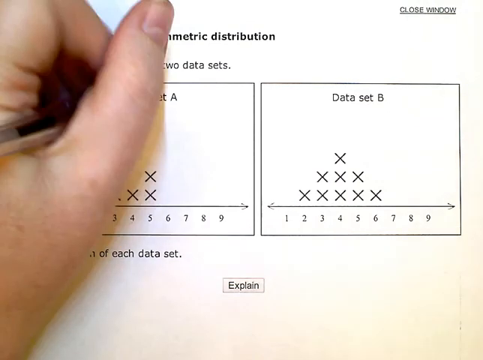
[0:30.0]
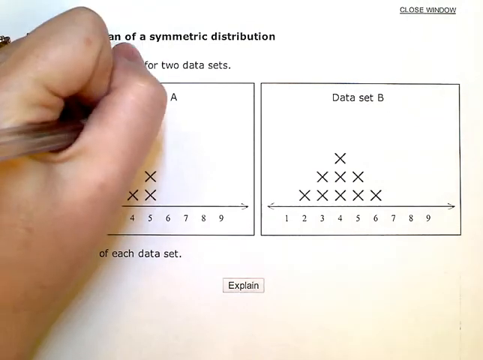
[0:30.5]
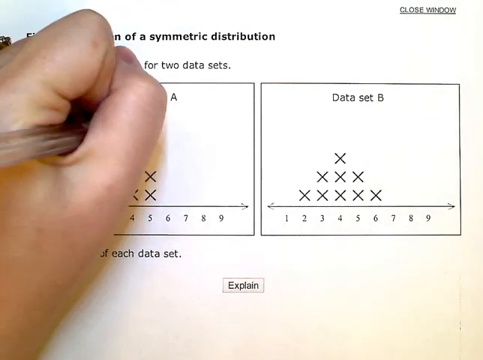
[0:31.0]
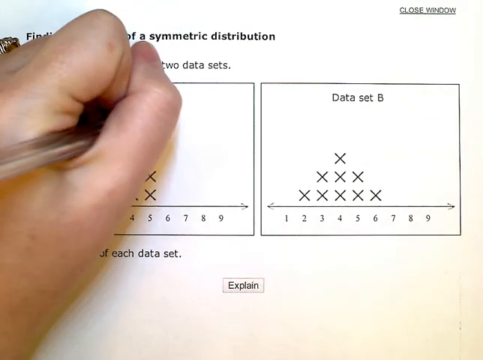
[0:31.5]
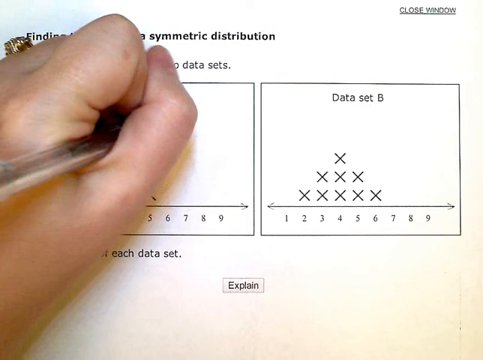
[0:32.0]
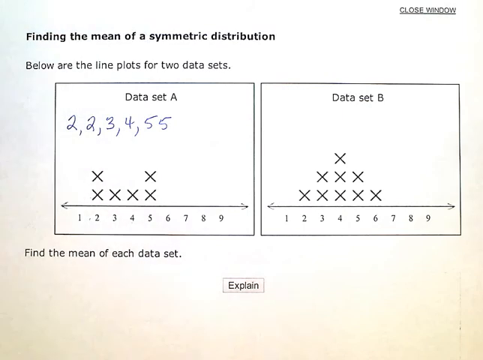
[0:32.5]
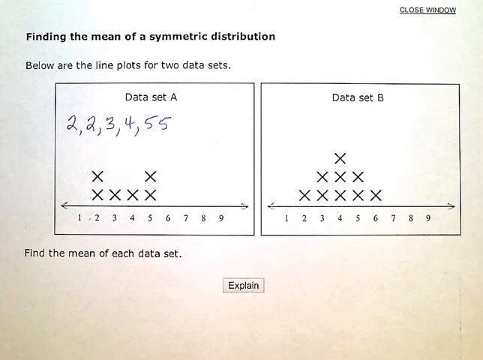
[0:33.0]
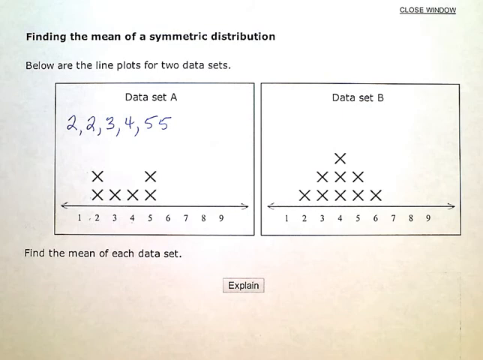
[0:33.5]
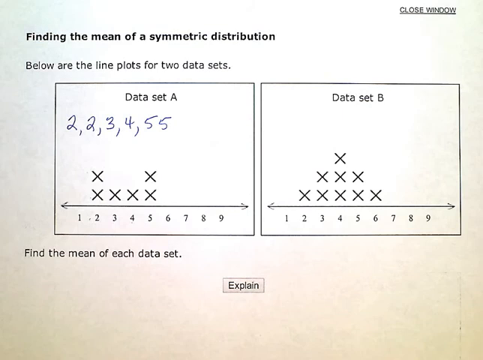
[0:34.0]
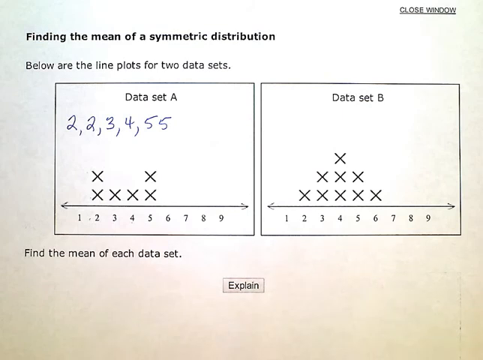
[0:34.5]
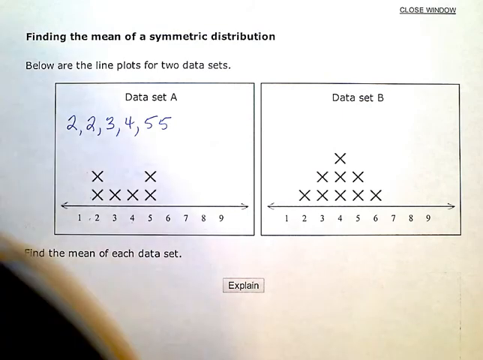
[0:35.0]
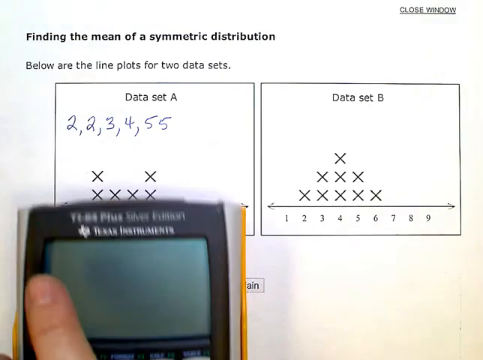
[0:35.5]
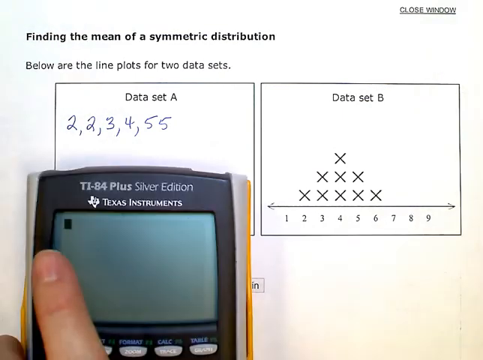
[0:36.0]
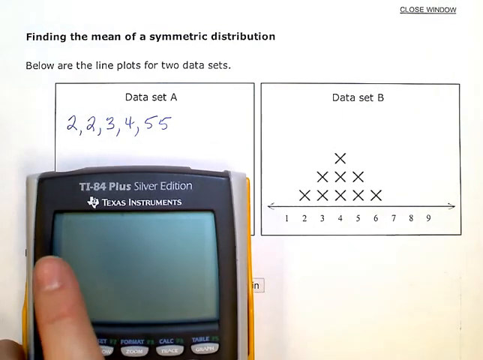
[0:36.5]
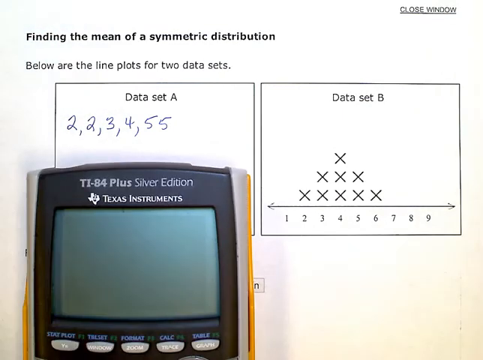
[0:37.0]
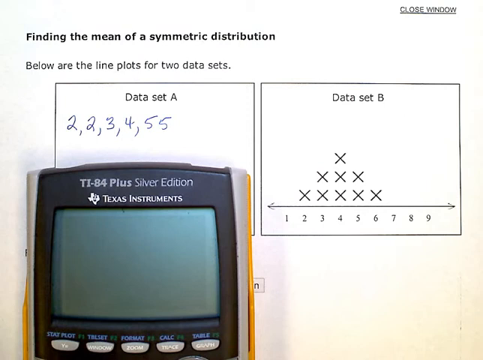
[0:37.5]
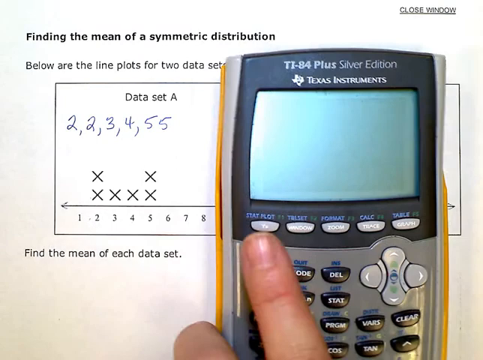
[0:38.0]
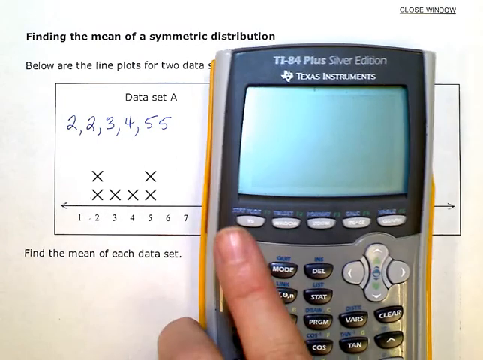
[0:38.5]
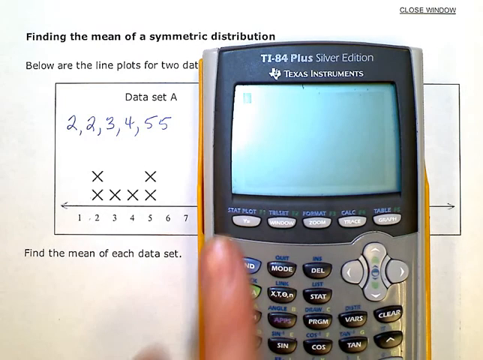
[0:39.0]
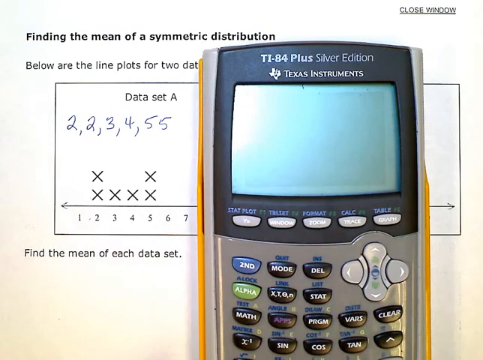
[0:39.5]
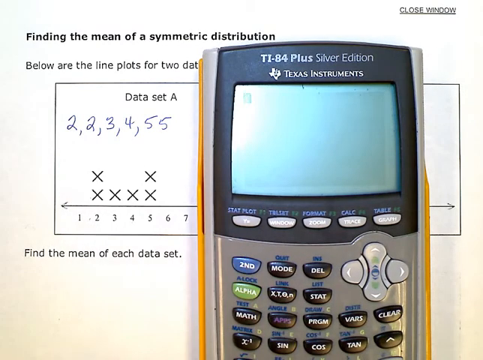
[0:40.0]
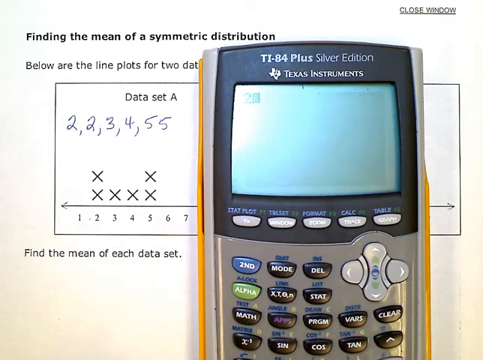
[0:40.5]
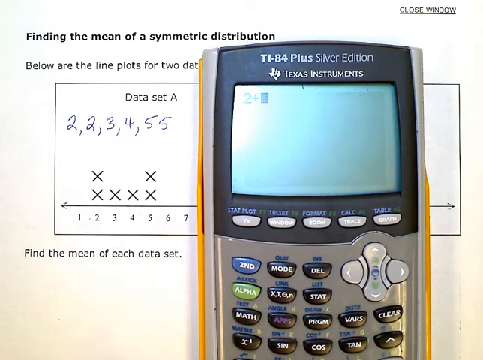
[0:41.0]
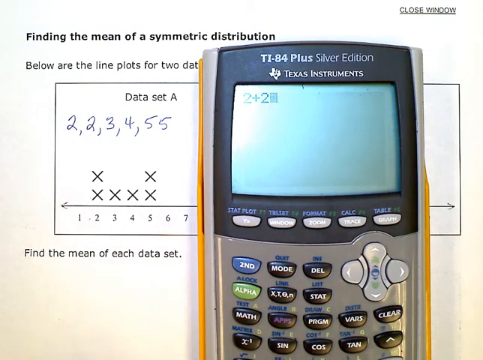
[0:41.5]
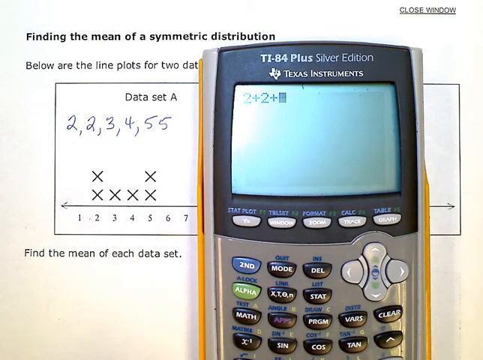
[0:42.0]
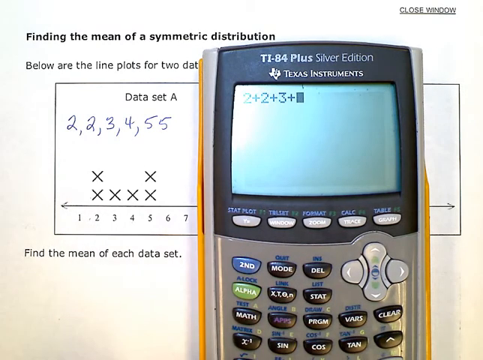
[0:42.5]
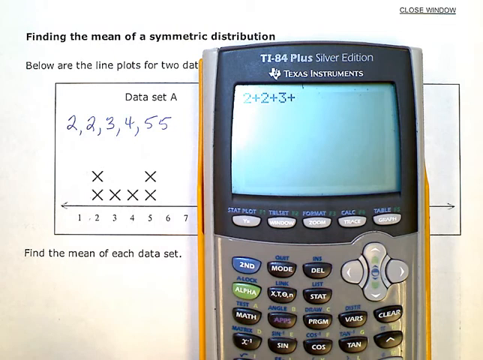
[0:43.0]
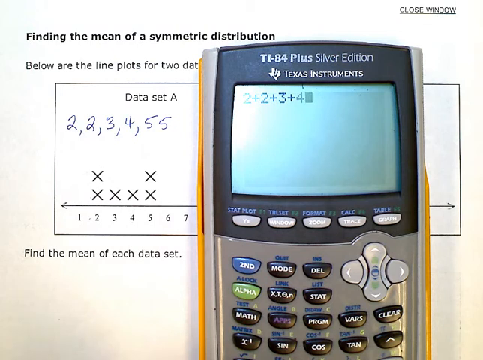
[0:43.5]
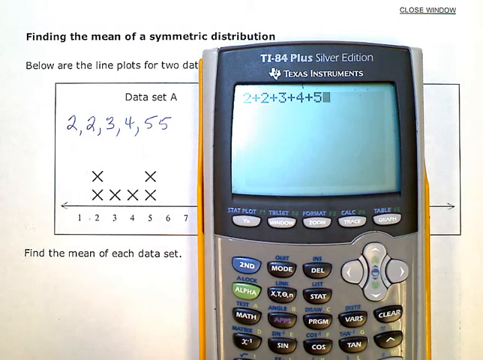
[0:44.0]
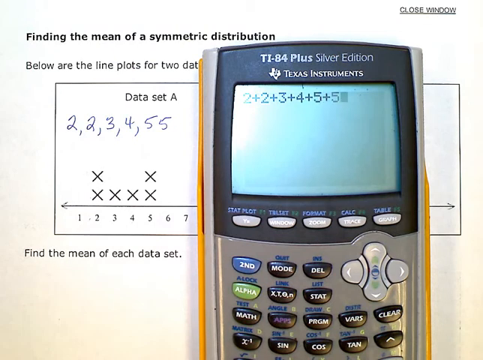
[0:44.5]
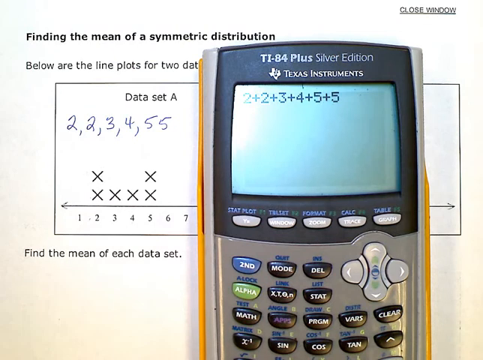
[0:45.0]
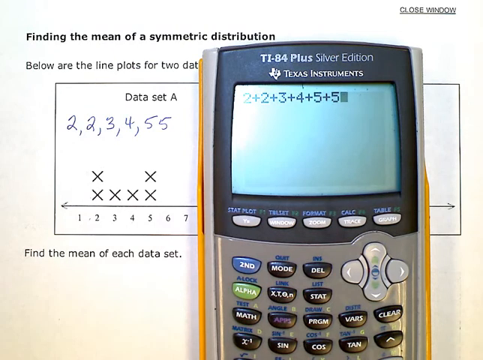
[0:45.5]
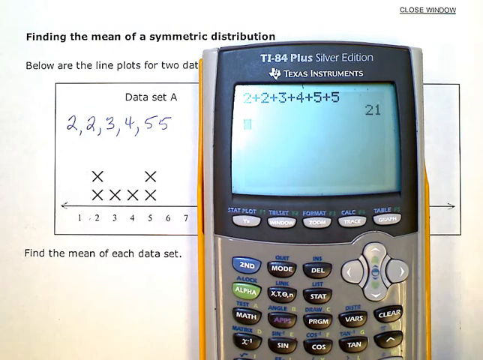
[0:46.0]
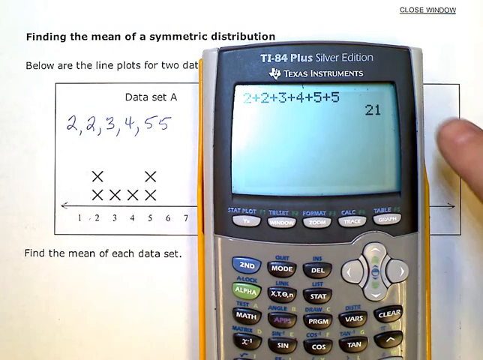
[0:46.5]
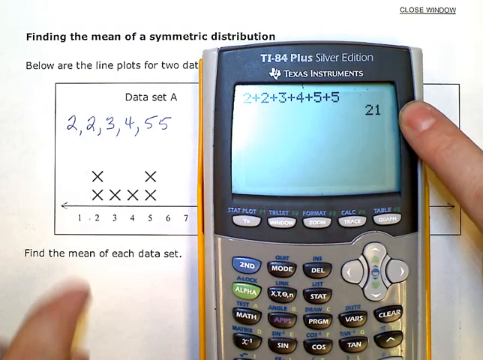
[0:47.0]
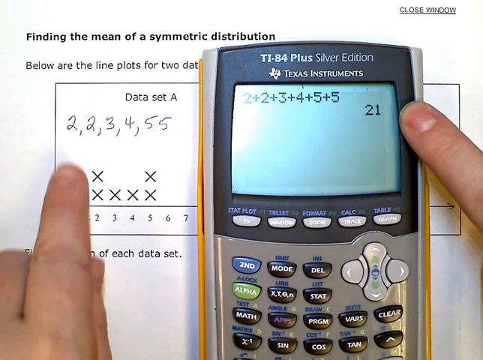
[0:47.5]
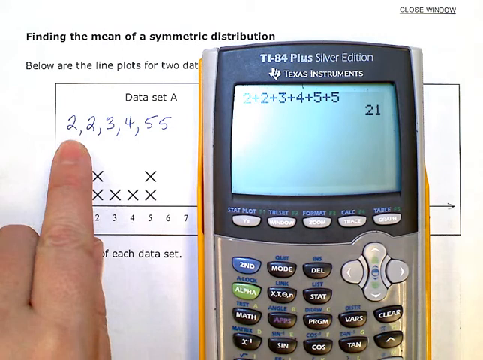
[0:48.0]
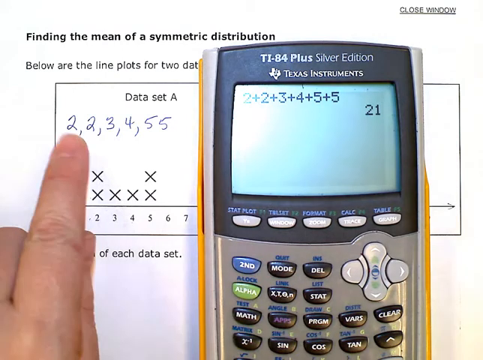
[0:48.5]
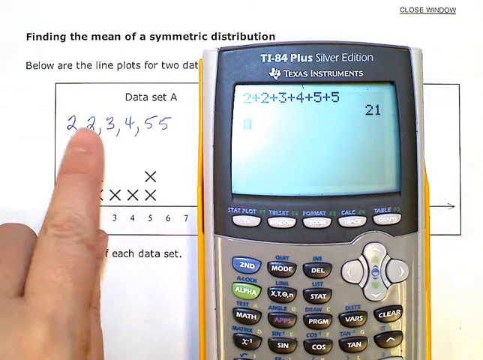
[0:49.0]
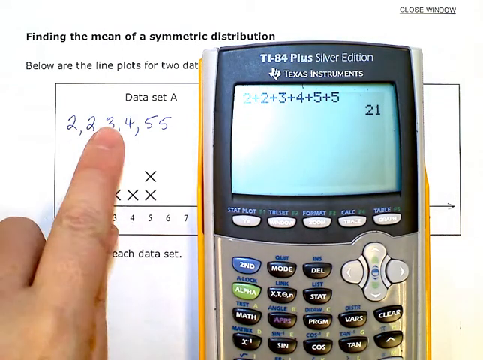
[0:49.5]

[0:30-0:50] She continues writing, her hand covering what she writes. When her hand moves away, the numbers read 2, 2, 3, 4, 5, 5, with commas between each except the last two fives, which look like 55. She places a Texas Instrument calculator over the bottom part of the page, over the number line marked one through nine, apparently the x-axis. The calculator's digital display has a blinking marker. It has a row of light gray buttons labeled y equals, windows, zoom and a few others, plus black buttons with writing such as delete and stat, and arrow keys for up, down, left and right. She moves the calculator so it is just over data set A. She types, from left to right, exactly what she handwrote: 2 + 2 + 3 + 4 + 5 + 5, which equals 21. She then uses her left index finger to point to each of the numbers she wrote.